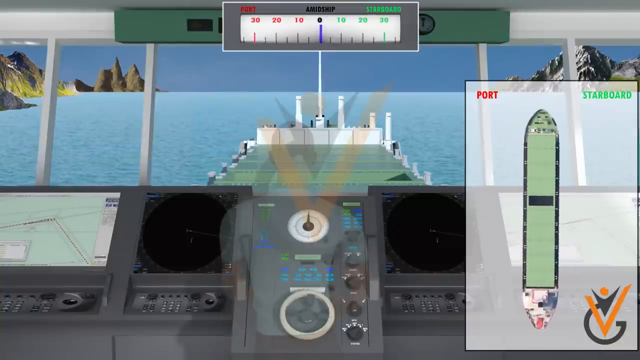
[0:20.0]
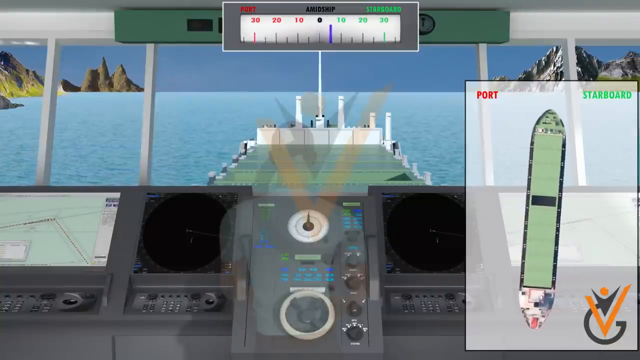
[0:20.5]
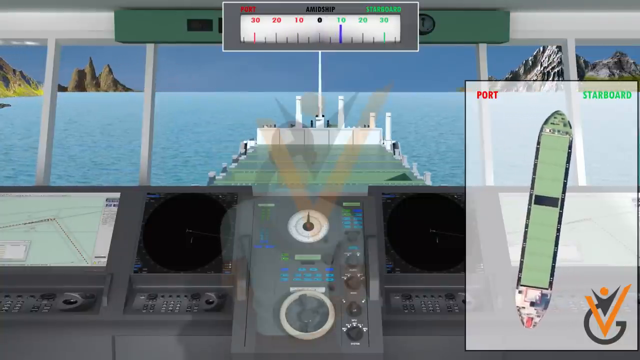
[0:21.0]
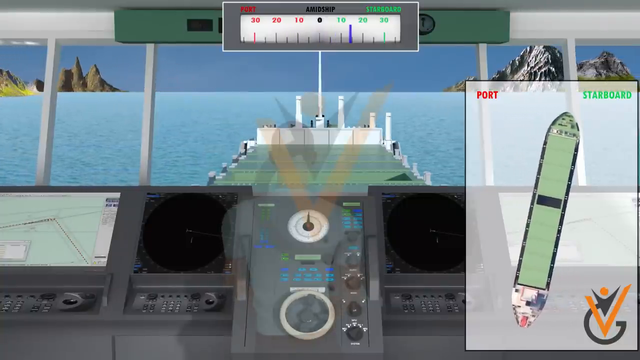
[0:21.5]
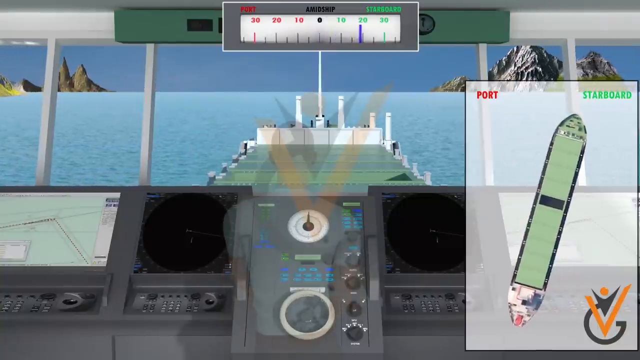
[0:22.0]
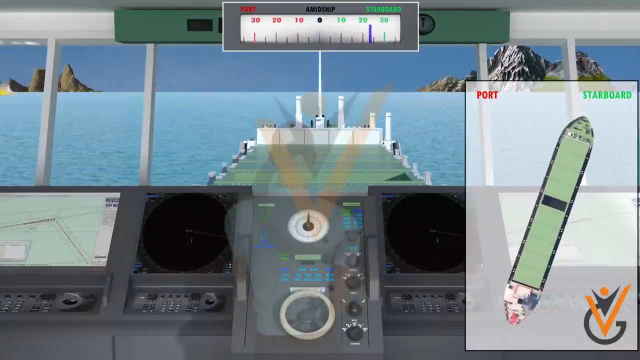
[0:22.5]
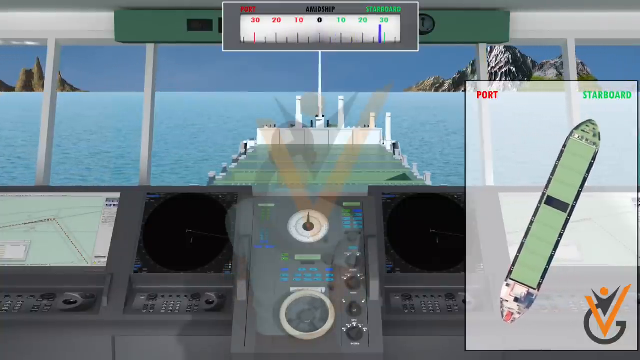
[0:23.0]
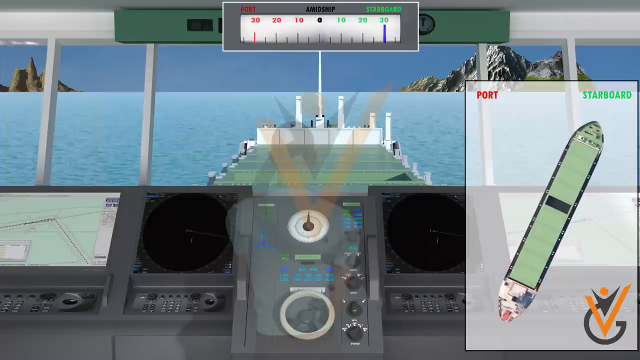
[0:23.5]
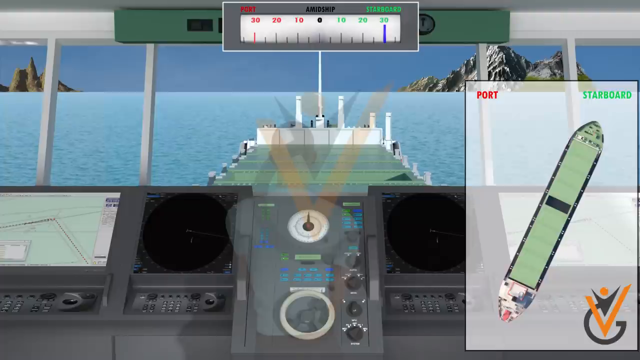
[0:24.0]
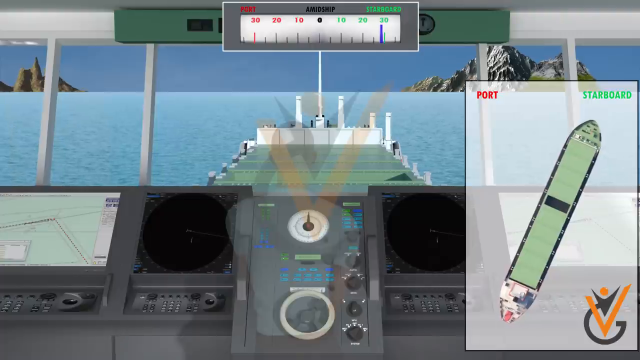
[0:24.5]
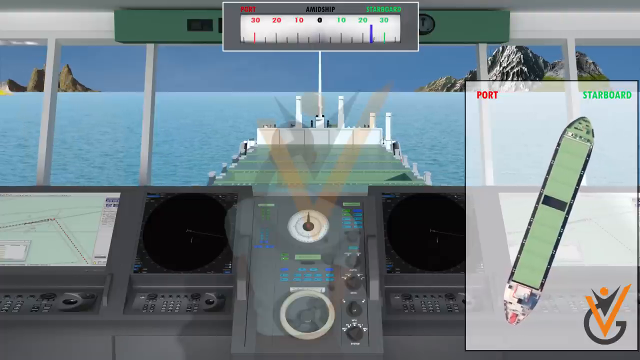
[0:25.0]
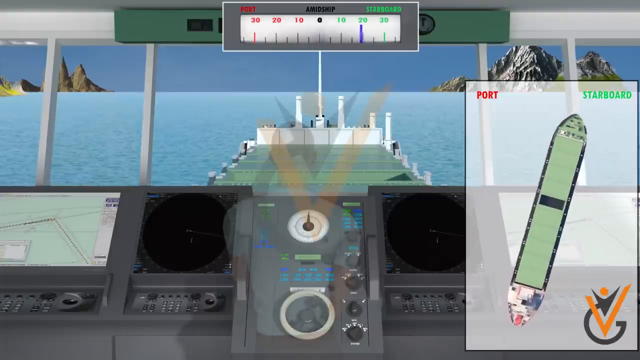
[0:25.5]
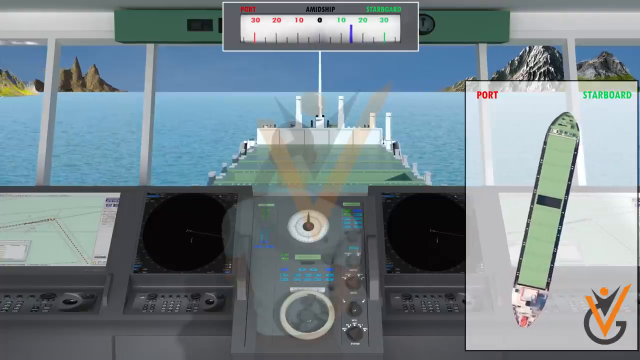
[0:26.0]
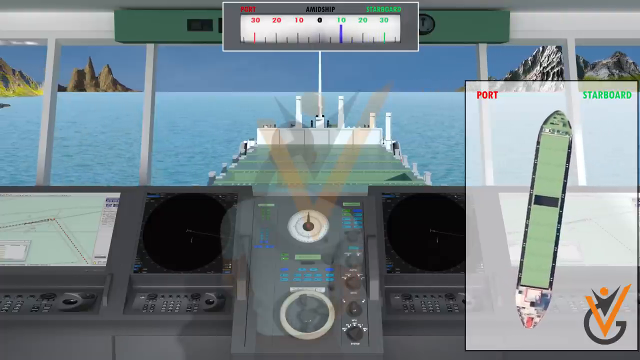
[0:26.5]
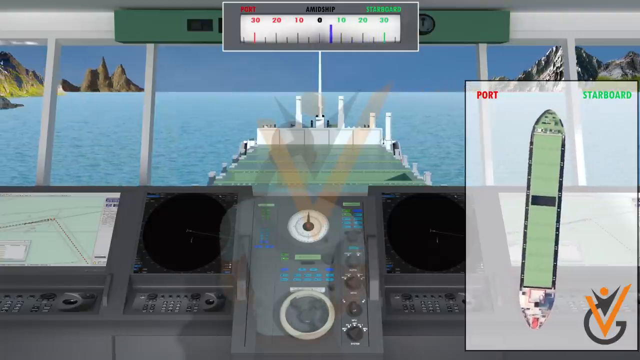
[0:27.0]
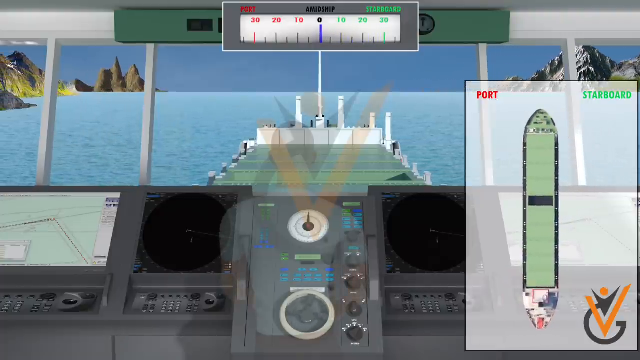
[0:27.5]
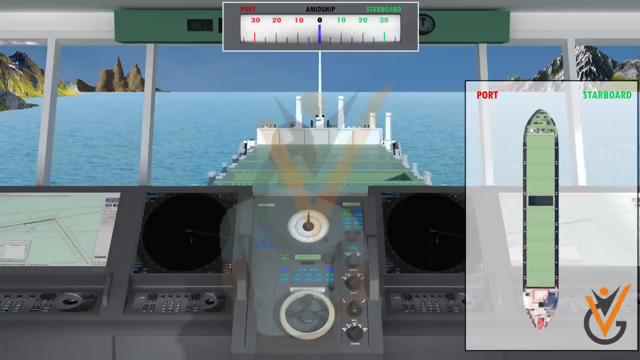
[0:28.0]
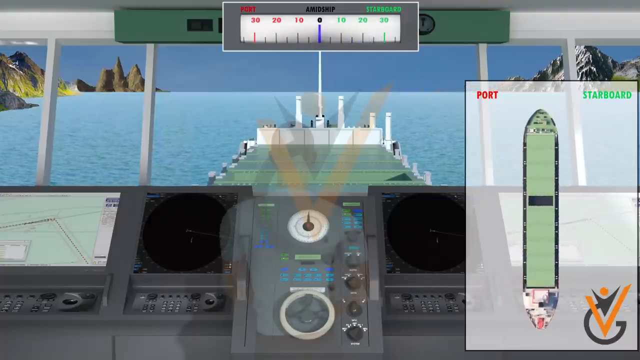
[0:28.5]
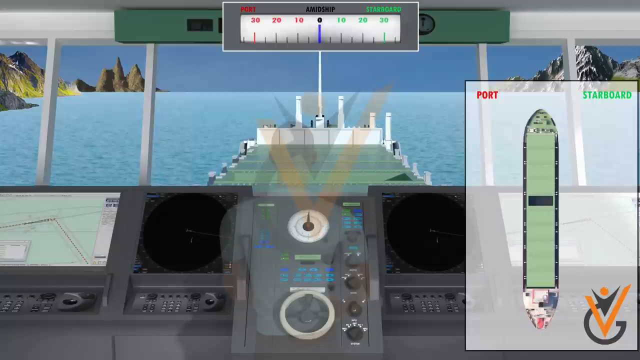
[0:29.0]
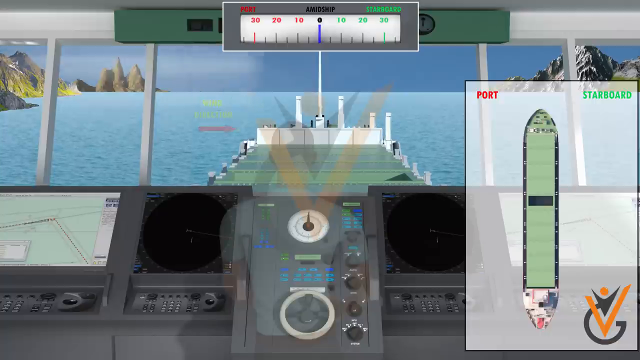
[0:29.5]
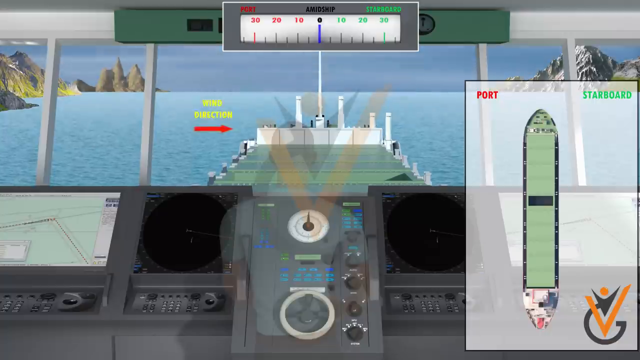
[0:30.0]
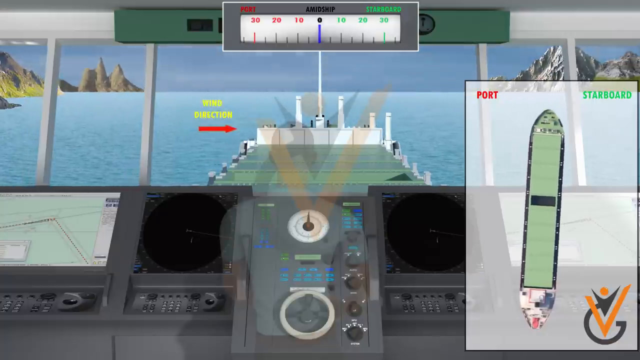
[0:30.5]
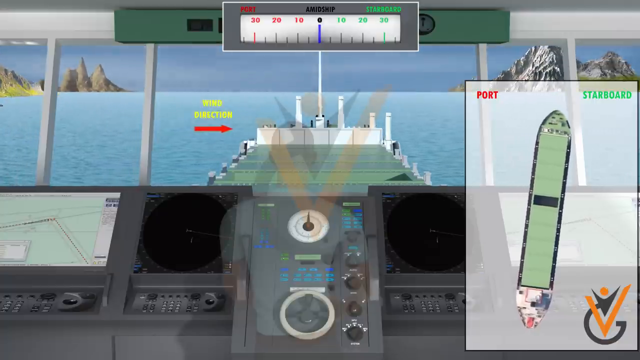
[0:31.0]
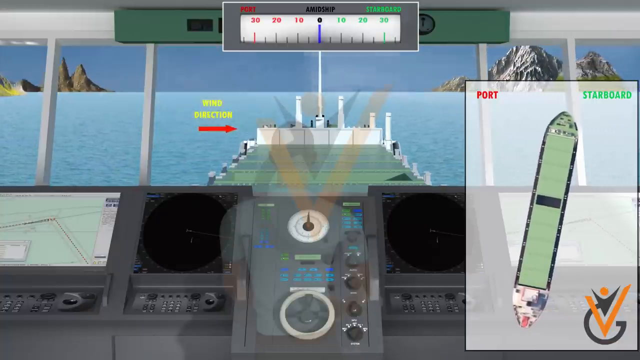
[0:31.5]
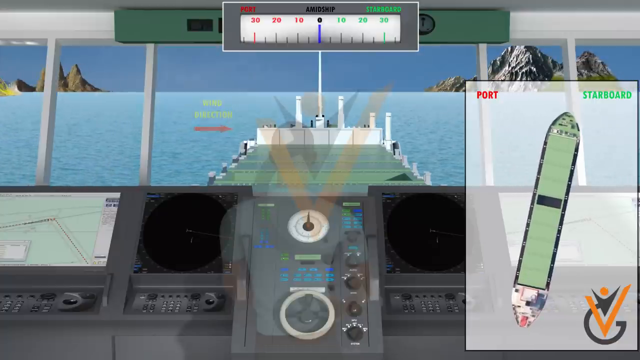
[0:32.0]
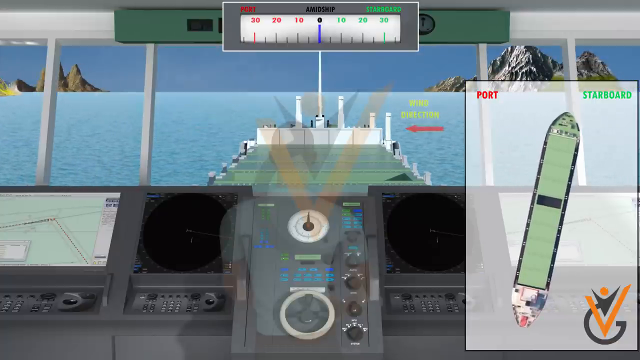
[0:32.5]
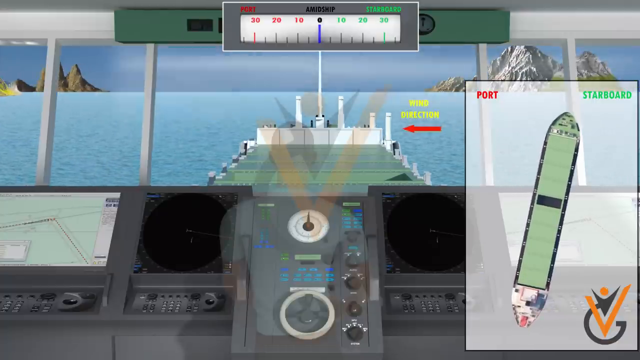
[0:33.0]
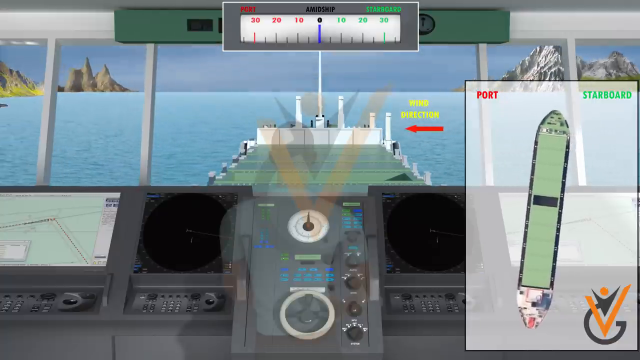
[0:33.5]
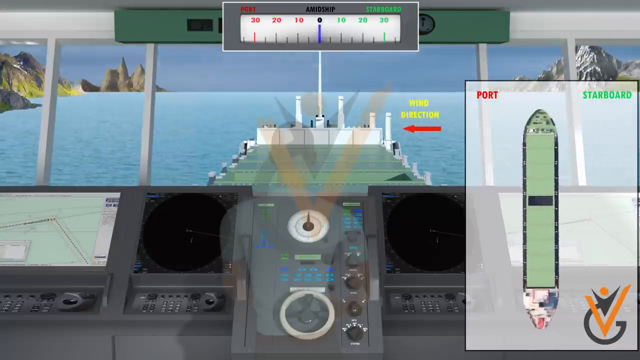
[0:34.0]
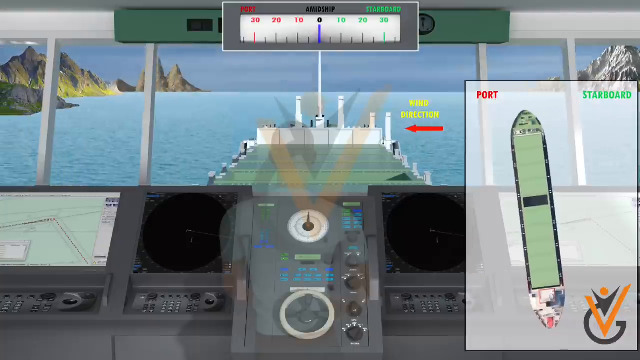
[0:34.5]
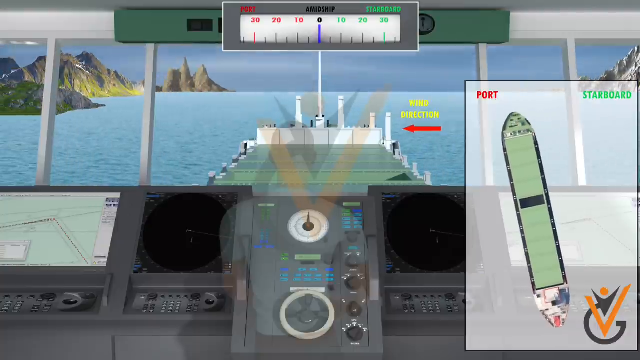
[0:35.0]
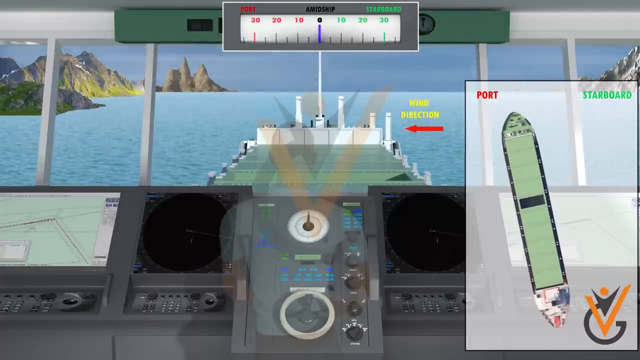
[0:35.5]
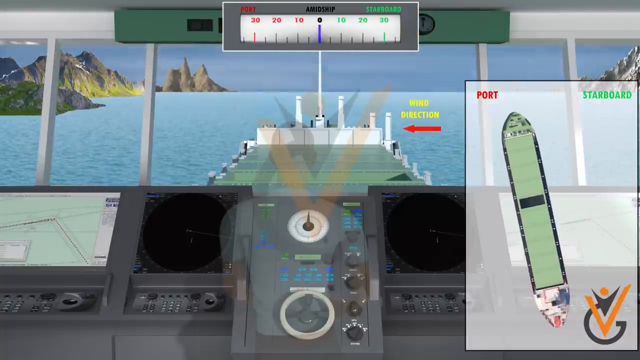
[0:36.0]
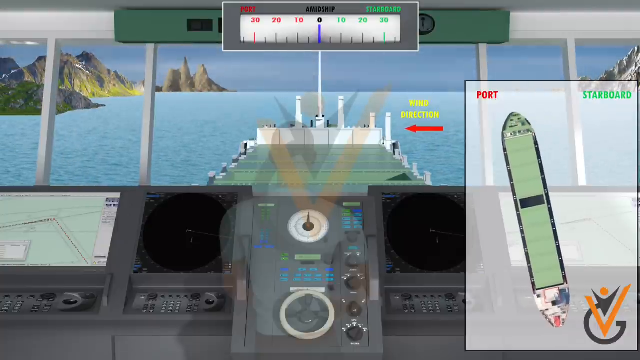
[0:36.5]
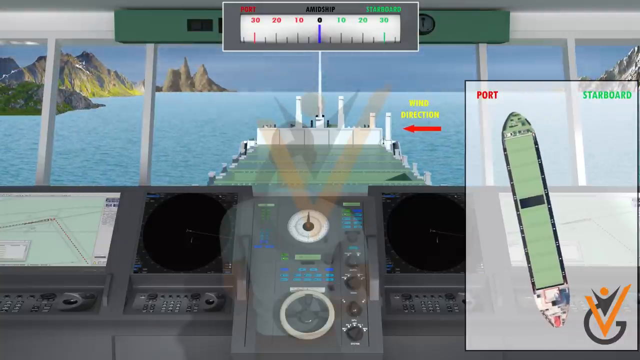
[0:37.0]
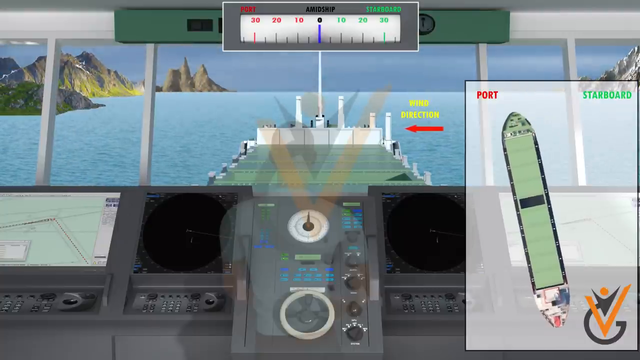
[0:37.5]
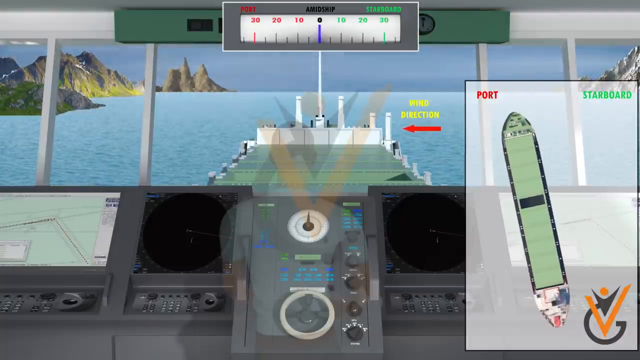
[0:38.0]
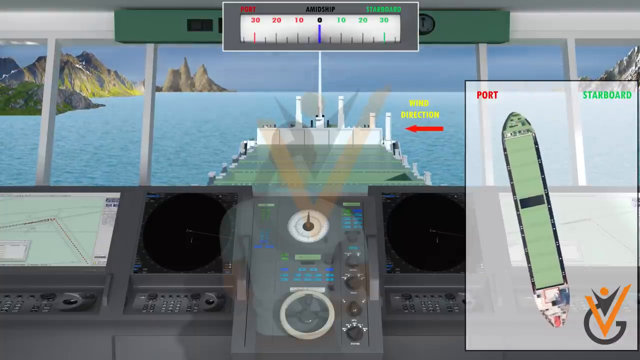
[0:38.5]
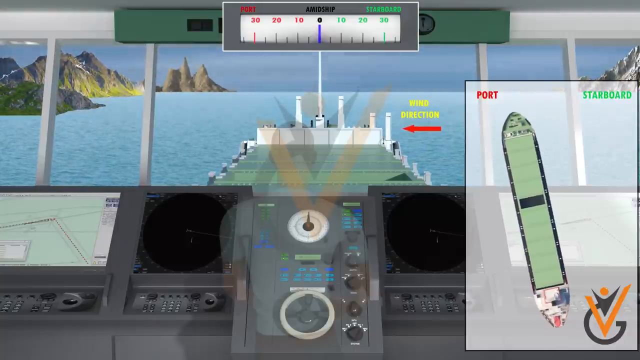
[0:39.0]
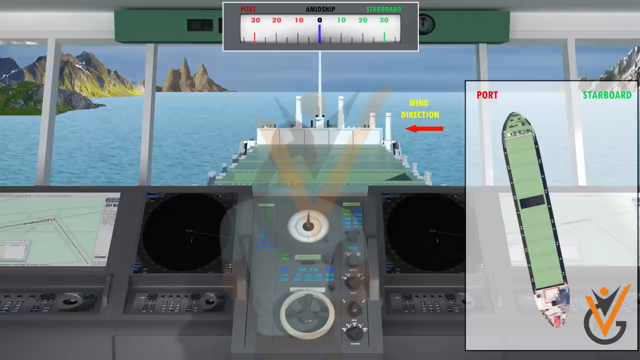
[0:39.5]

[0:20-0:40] The computer-simulated boat is moved back and forth between port and starboard, or left and right, across a simulated ocean, with several mountains in the background on both the left and right sides of the screen. An arrow appears on the screen showing wind direction from both sides, which affects the steering of the boat. On the panel, maps on both the left and right sides give directions for the person to steer the boat. A gauge at the top shows whether the boat is to the port side, the starboard side, or going straight down the center; on both sides of the gauge, the numbers go from 10 to 30 on the portion showing on the screen.